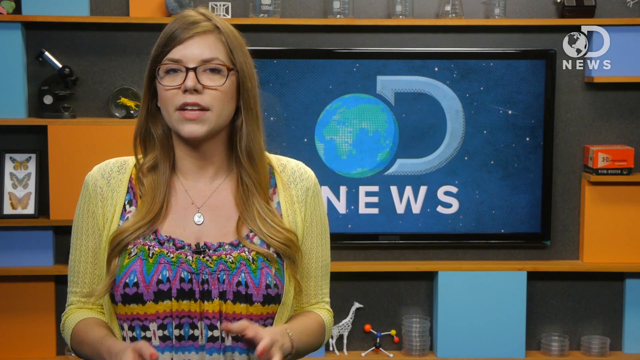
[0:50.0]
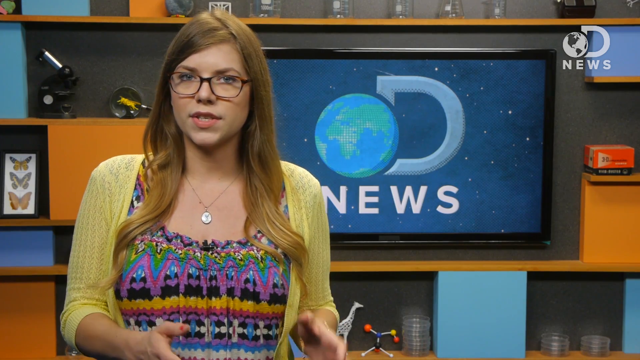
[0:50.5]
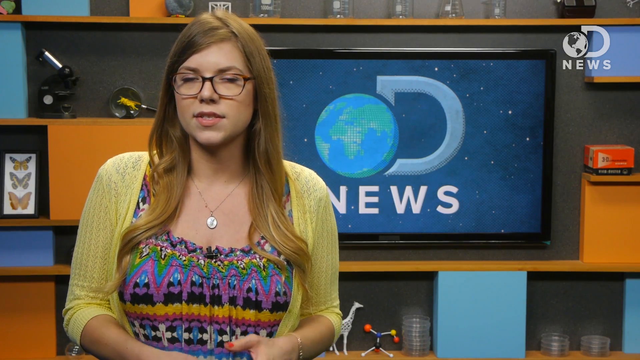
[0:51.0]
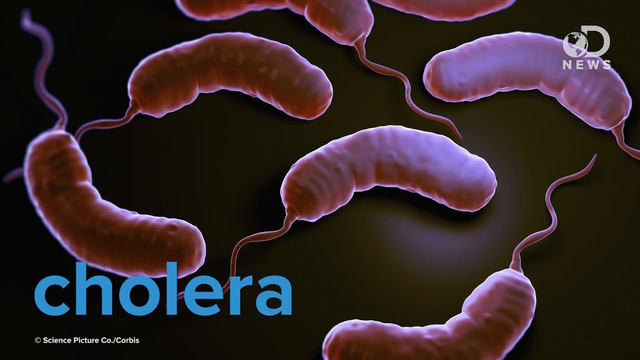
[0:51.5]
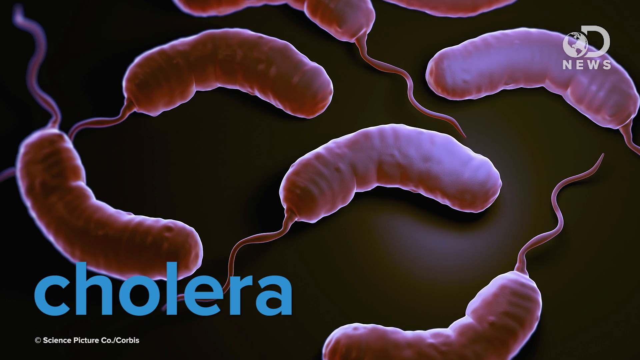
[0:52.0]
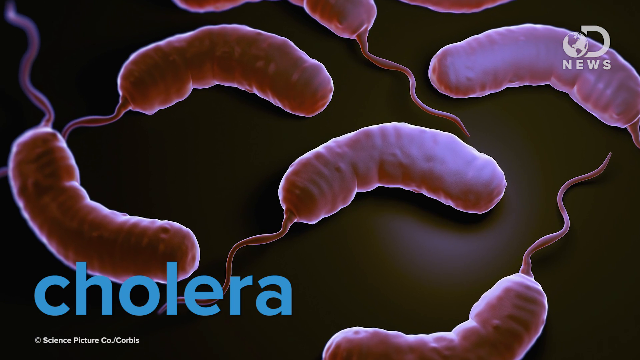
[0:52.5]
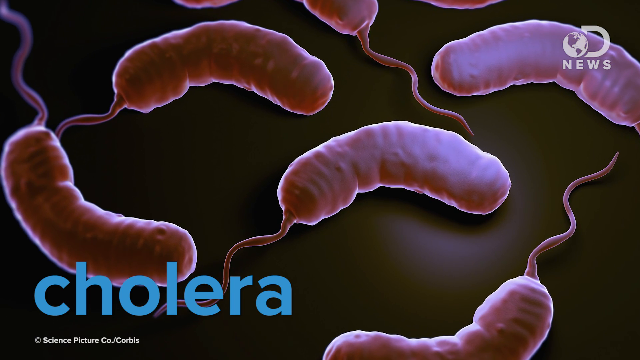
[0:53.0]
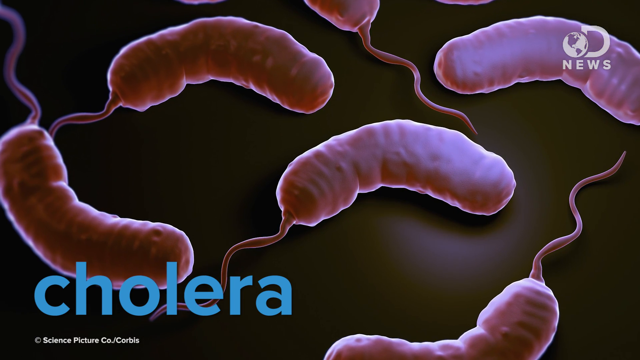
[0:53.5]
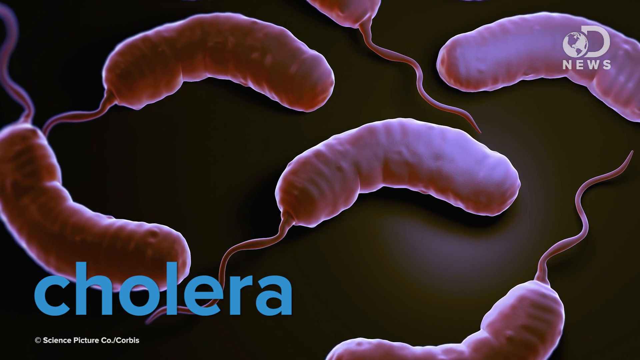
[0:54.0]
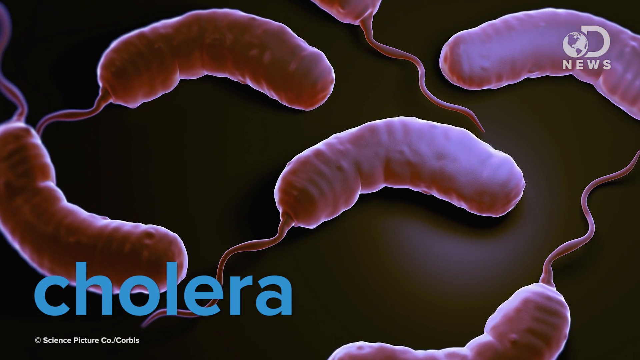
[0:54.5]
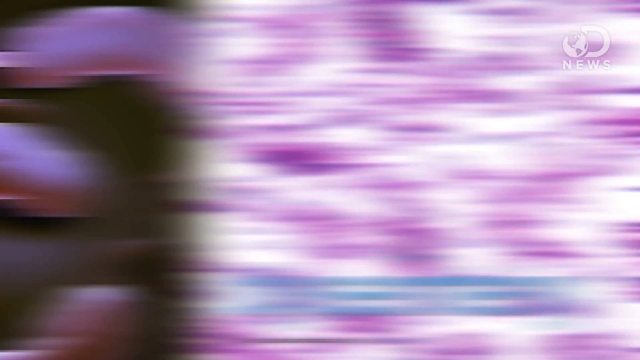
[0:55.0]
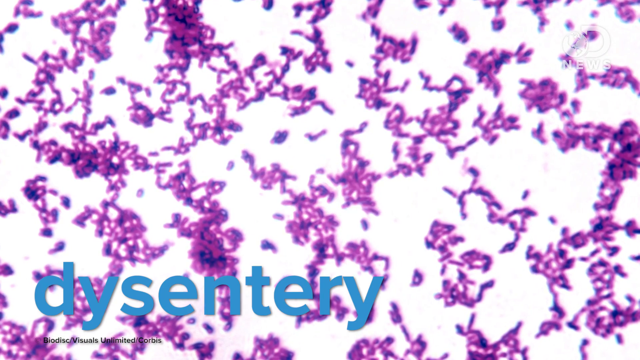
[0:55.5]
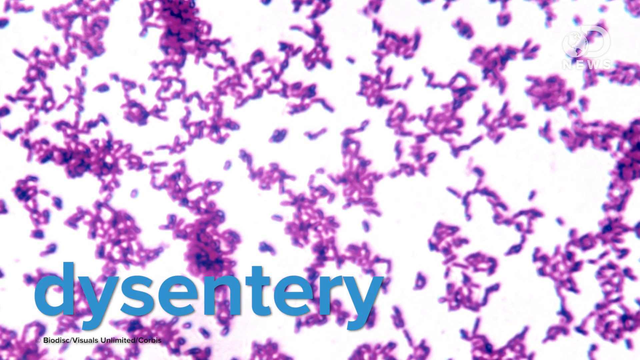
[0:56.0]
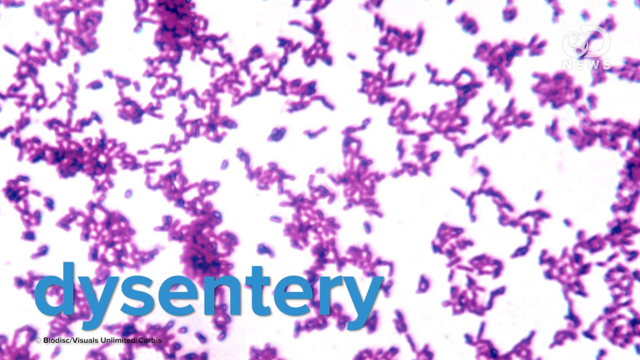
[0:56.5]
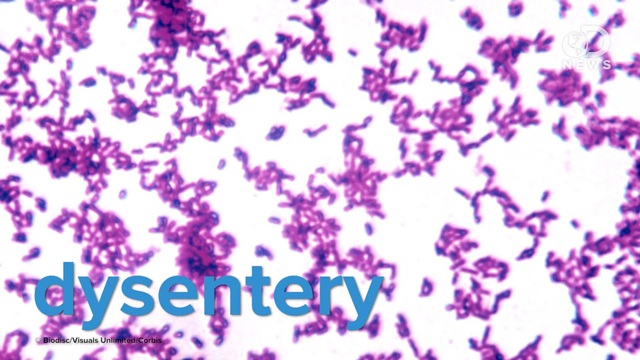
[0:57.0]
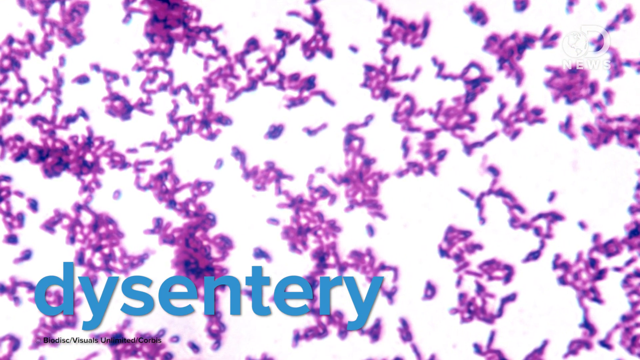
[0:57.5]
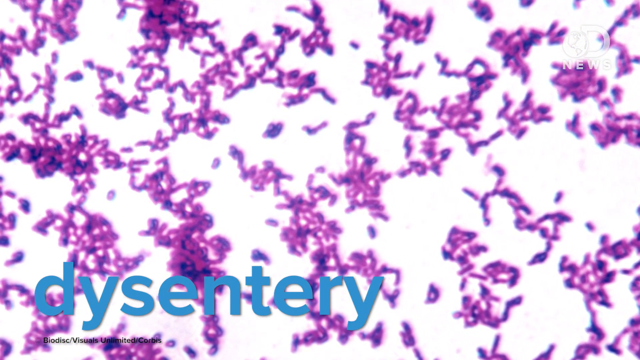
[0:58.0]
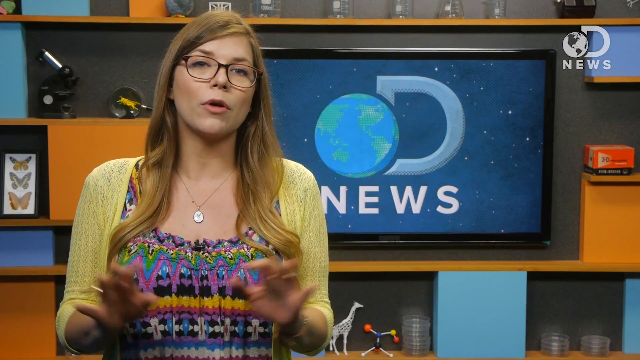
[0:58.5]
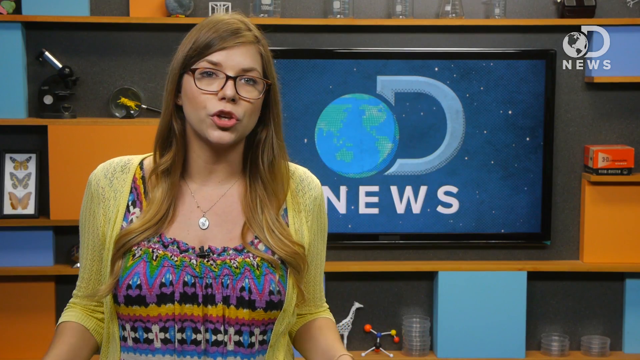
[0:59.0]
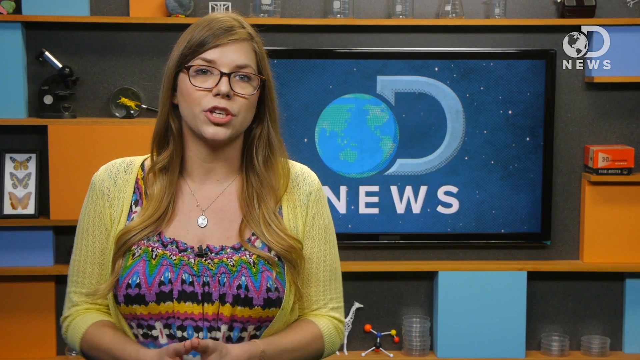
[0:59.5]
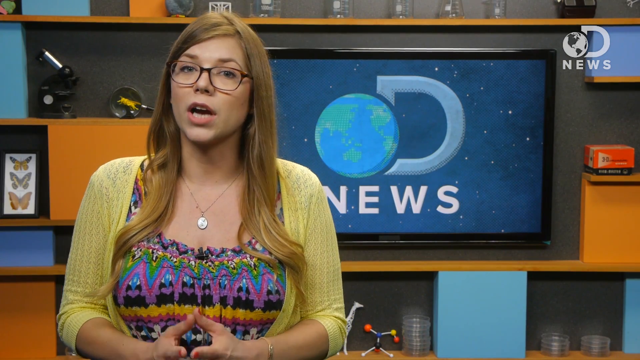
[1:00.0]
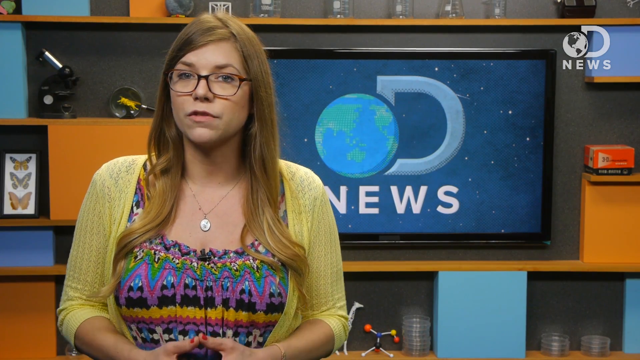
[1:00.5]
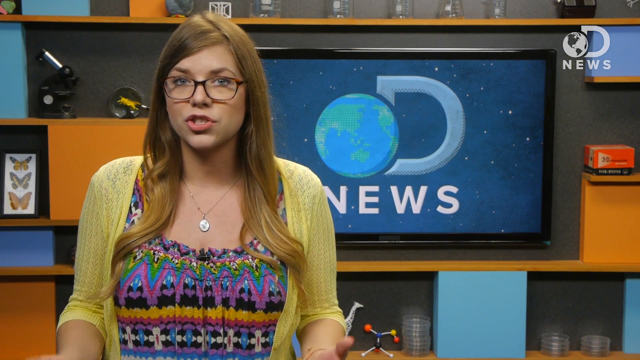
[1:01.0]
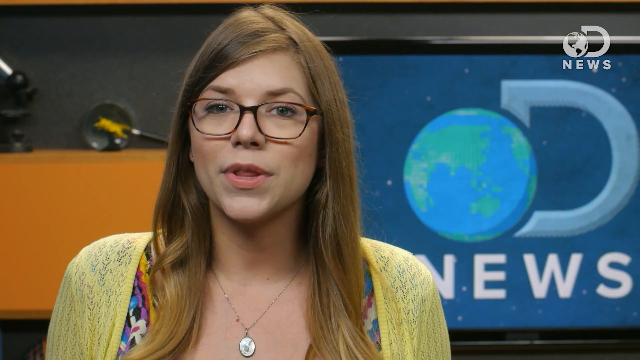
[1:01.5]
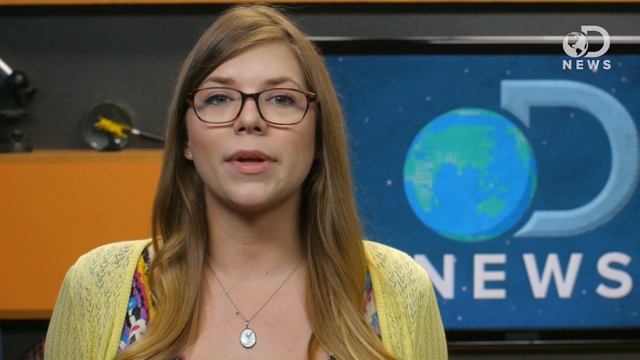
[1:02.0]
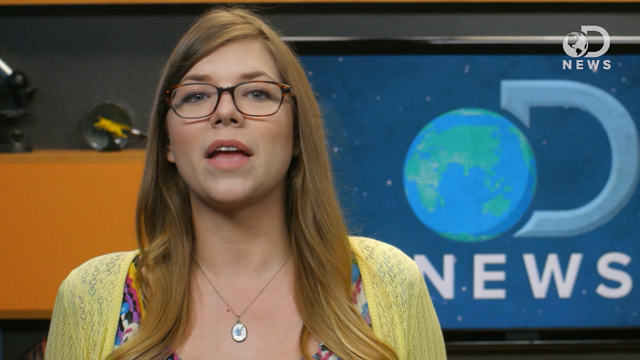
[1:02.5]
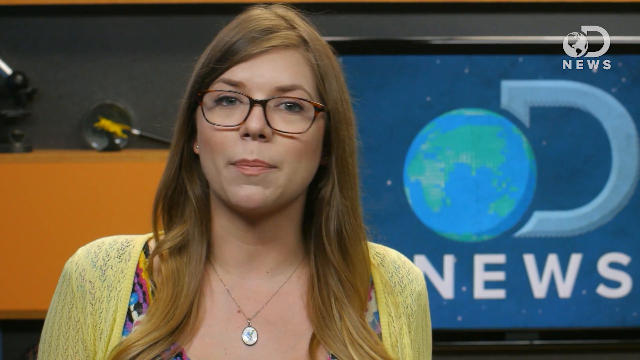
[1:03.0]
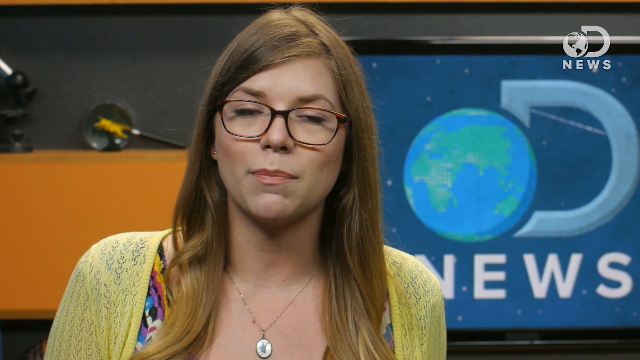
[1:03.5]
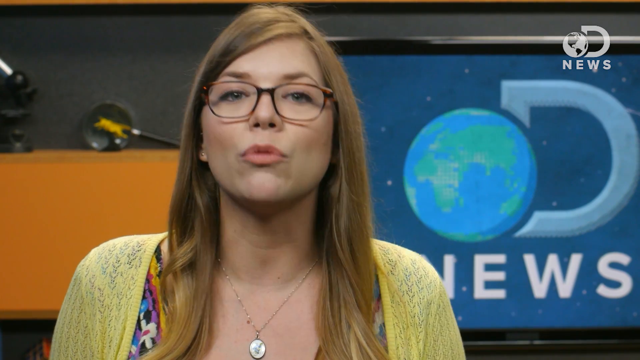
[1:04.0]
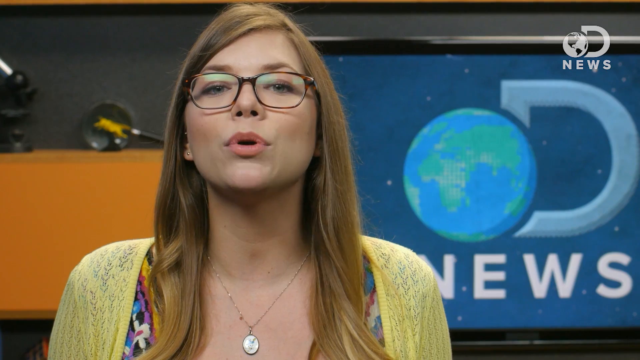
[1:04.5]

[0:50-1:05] Pictures show bacteria, dysentery and cholera. The dysentery is mostly purple and dark purple, made of very tiny organisms kind of clumped together on a white background; the purple etchings almost look like little letters kind of hooked together and stand out against the white. The cholera almost looks like hot dogs or sausages hooked together: on a very dark background, kind of pinkish, purplish little sausage shapes are each connected by a thin line, almost like a little train.